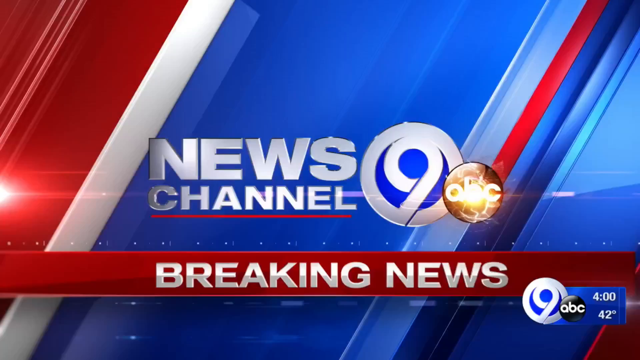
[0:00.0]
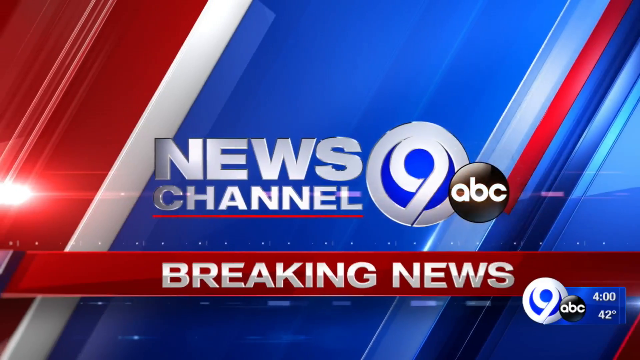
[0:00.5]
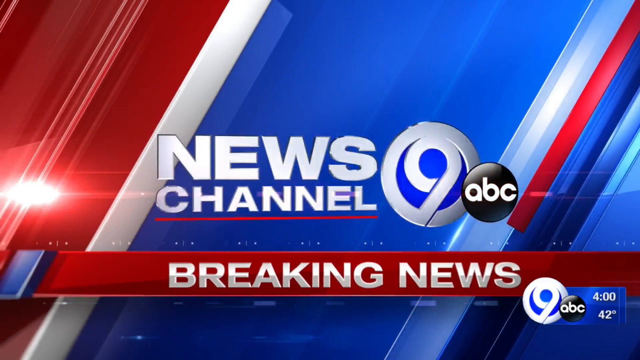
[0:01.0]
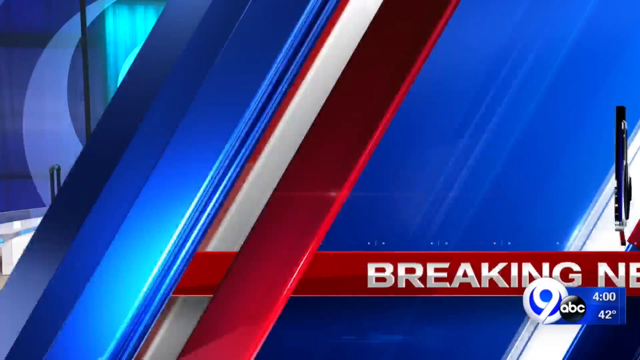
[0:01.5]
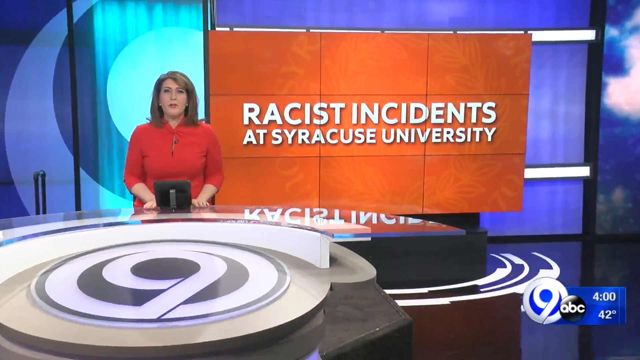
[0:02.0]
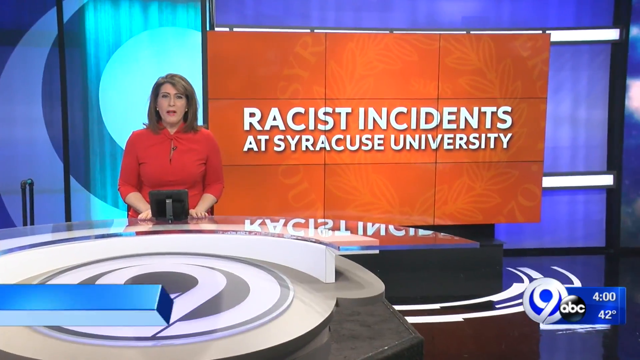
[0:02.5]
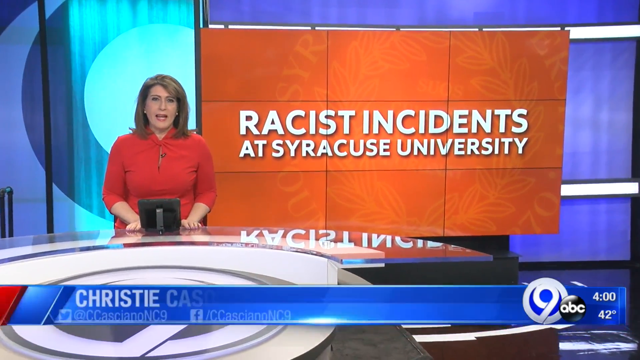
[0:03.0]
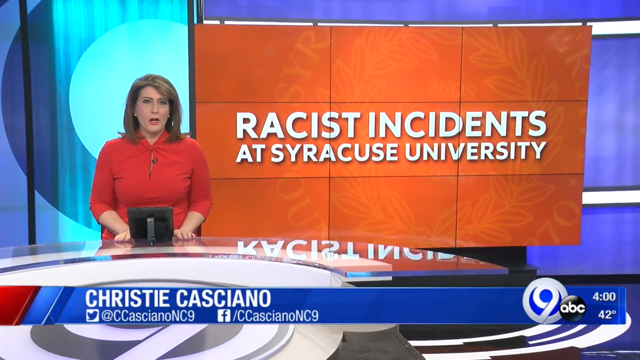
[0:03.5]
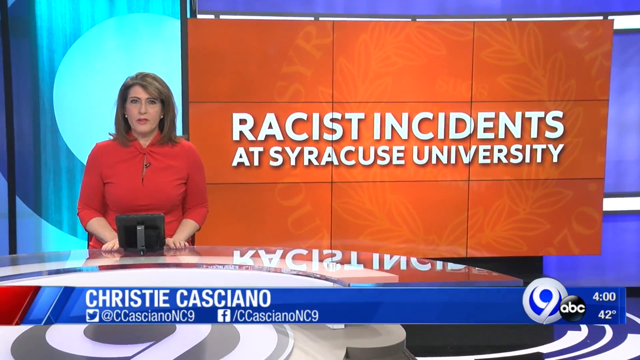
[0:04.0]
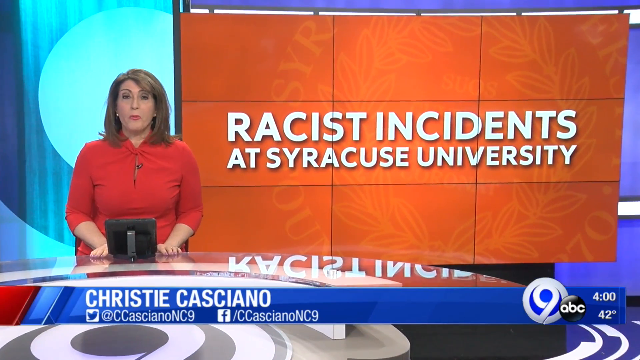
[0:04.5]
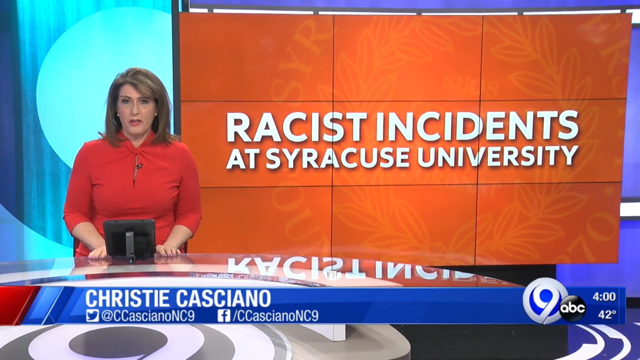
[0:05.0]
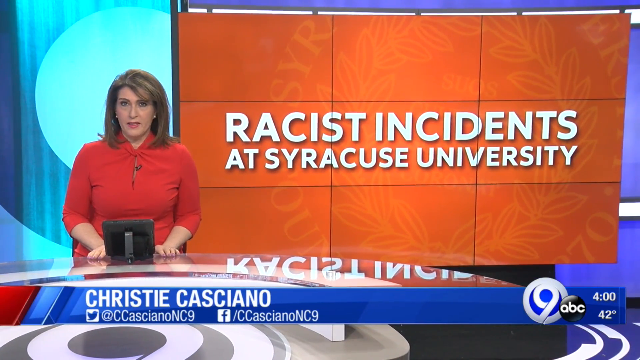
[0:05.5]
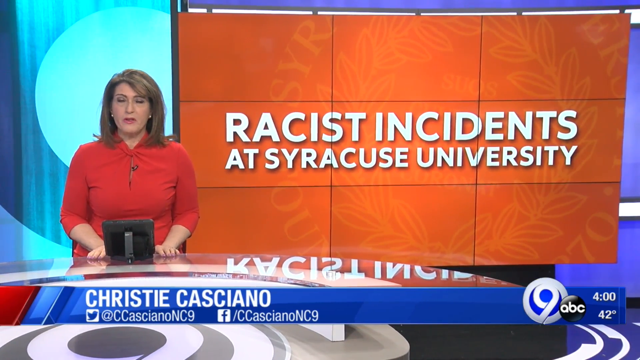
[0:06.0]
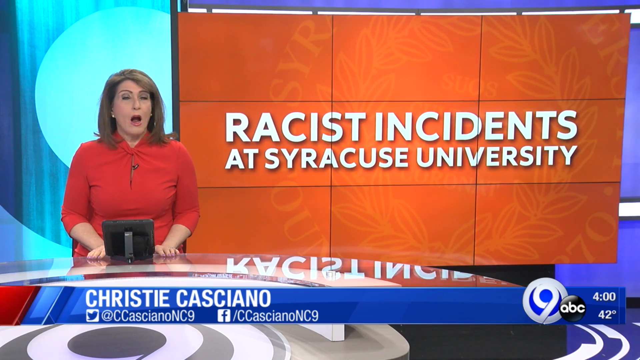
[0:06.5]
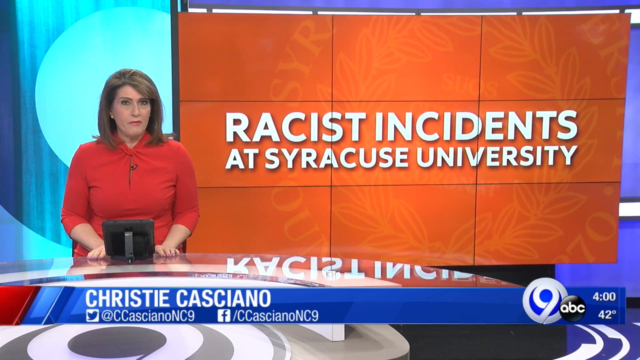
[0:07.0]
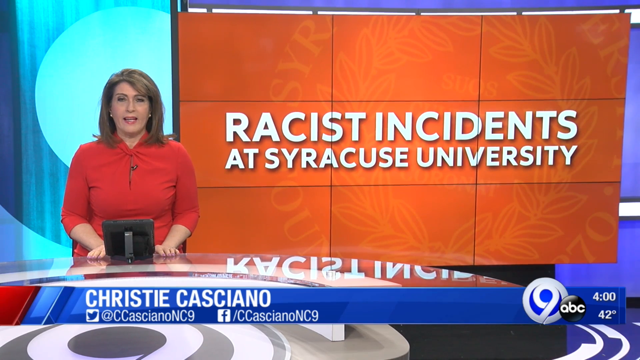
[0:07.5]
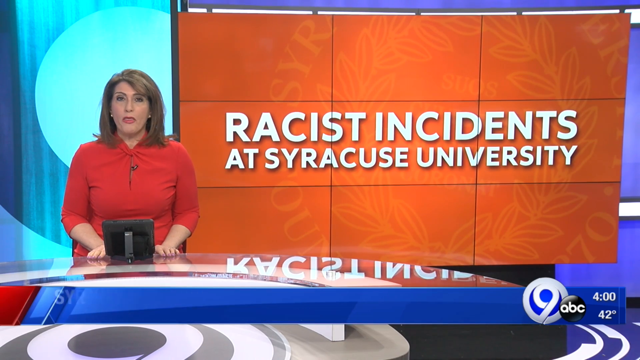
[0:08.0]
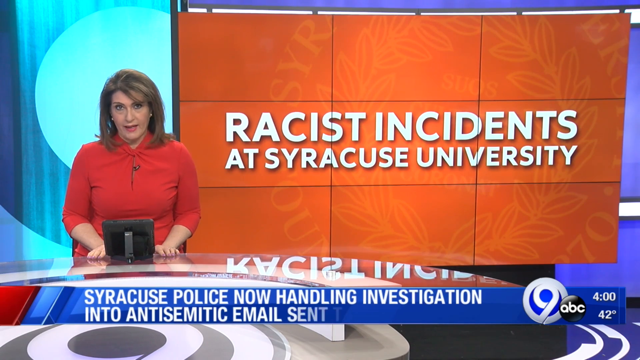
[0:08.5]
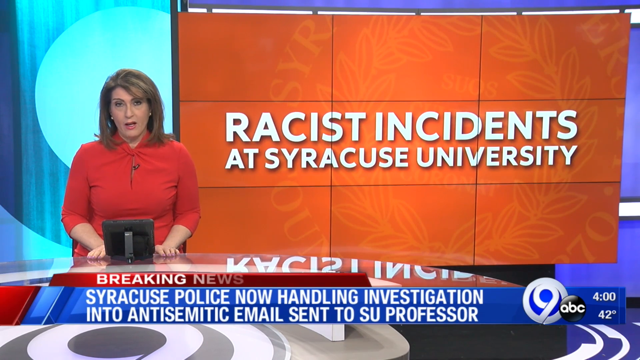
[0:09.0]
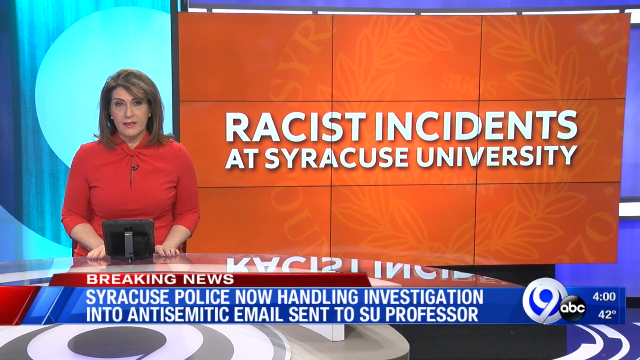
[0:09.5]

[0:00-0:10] The video is a breaking news report from News Channel 9, an ABC affiliate. It begins with a title screen showing the station's logo, with a "Breaking News" banner across the bottom of the screen. This moves to the side, revealing a female news presenter standing behind a desk in a studio. Behind her is a large video screen display that looks as if it is divided into nine different sections. A blue text bar appears at the bottom of the screen identifying the presenter as Christie Casciano as the camera zooms into her and the video display. The text in the bar then changes to read "Breaking news, Syracuse police now handling investigation into antisemitic email sent to SU professor."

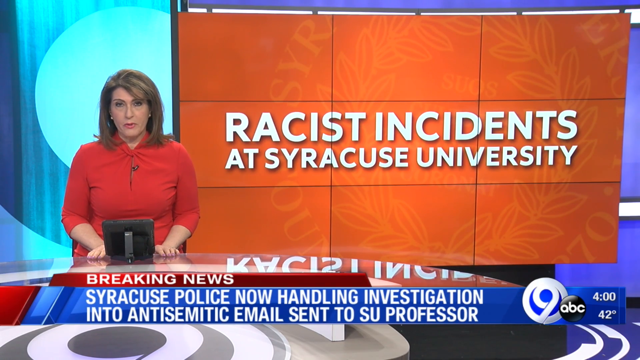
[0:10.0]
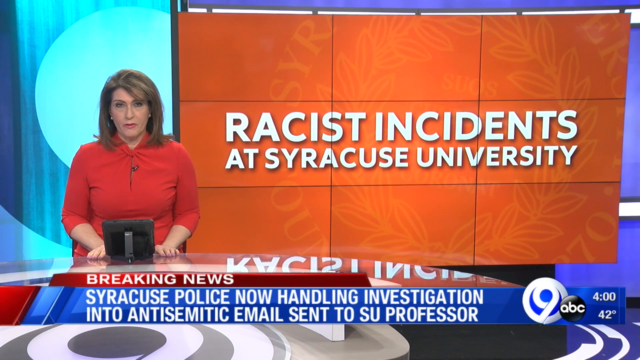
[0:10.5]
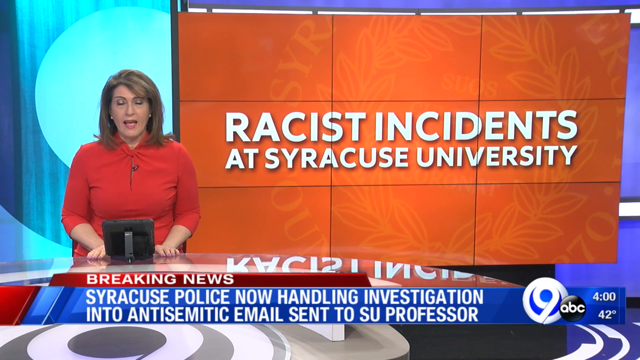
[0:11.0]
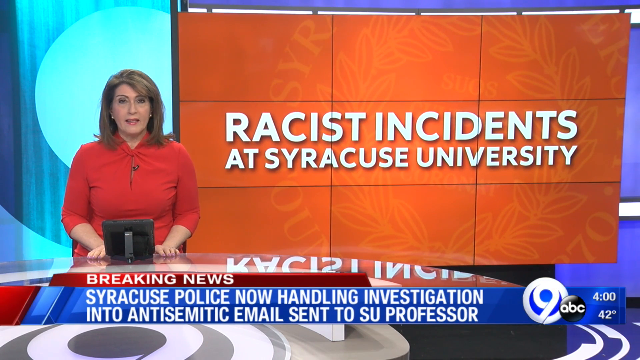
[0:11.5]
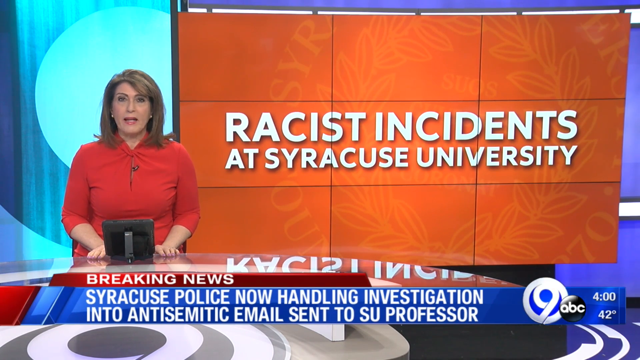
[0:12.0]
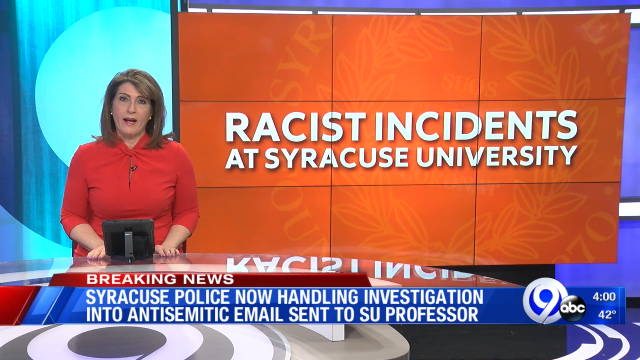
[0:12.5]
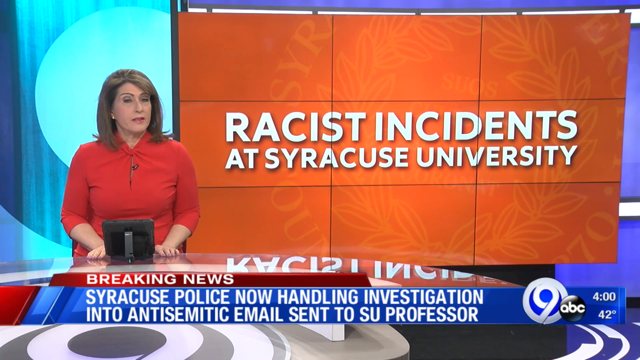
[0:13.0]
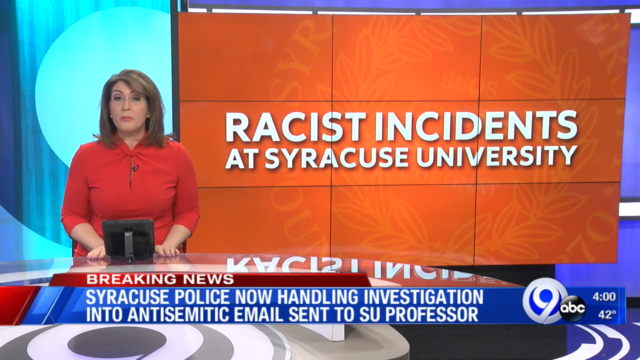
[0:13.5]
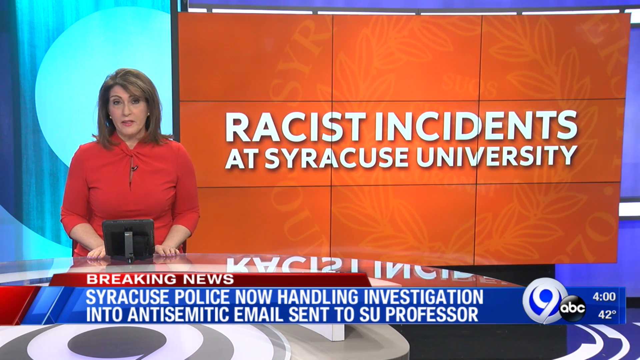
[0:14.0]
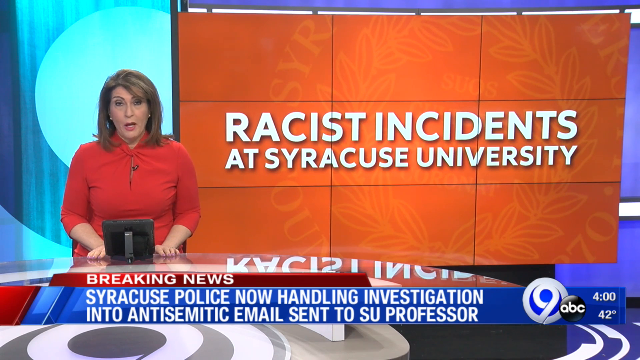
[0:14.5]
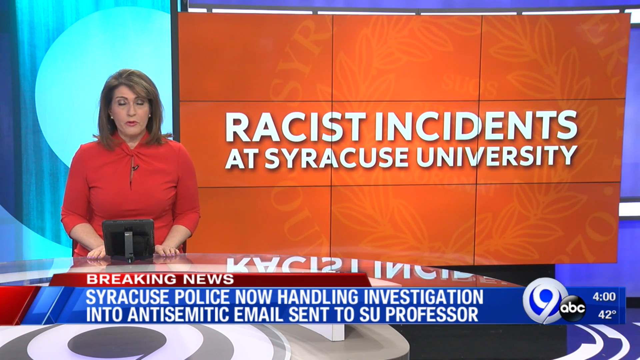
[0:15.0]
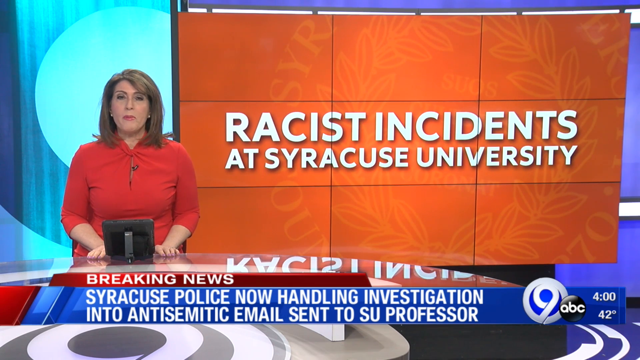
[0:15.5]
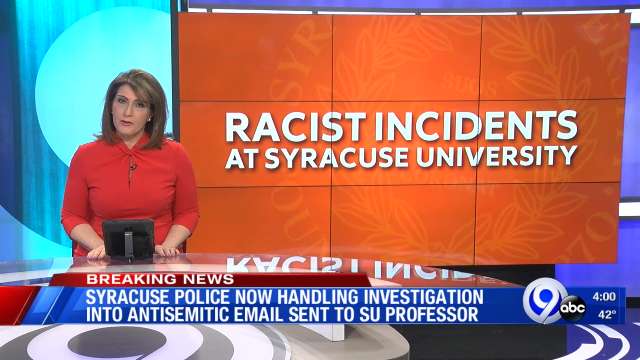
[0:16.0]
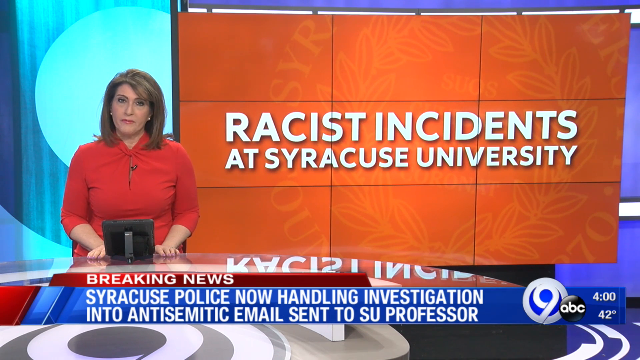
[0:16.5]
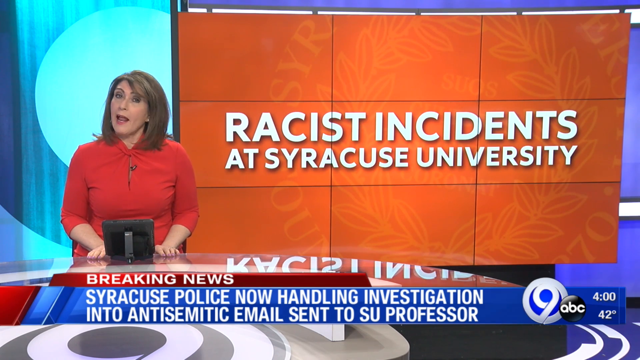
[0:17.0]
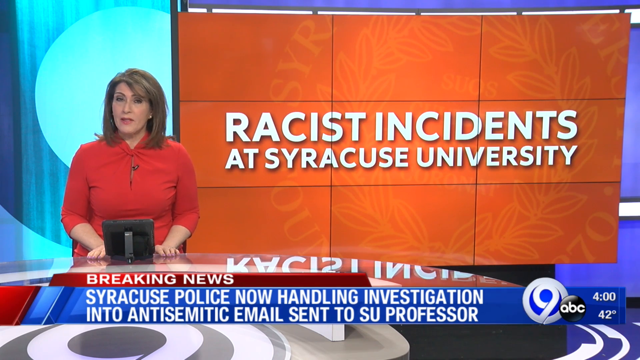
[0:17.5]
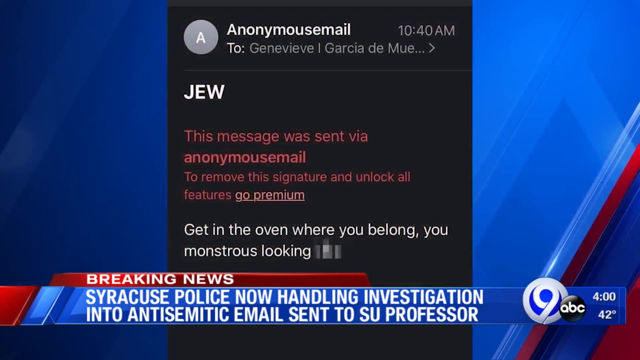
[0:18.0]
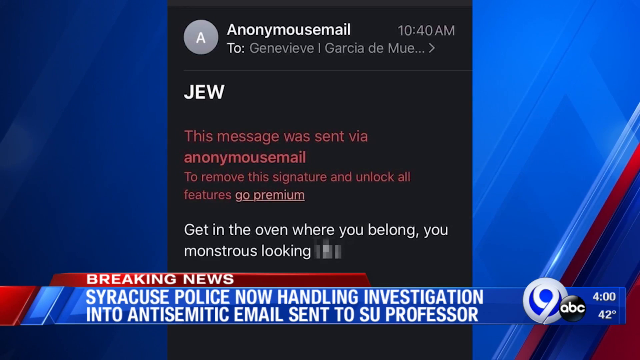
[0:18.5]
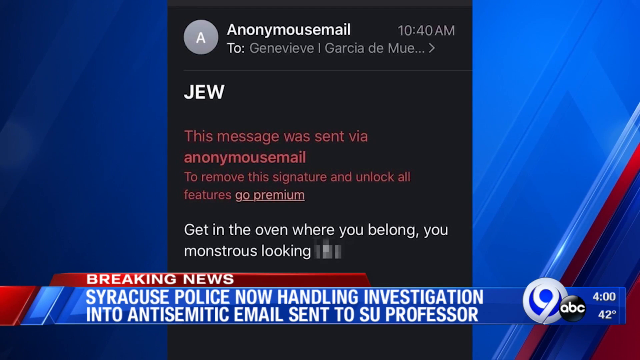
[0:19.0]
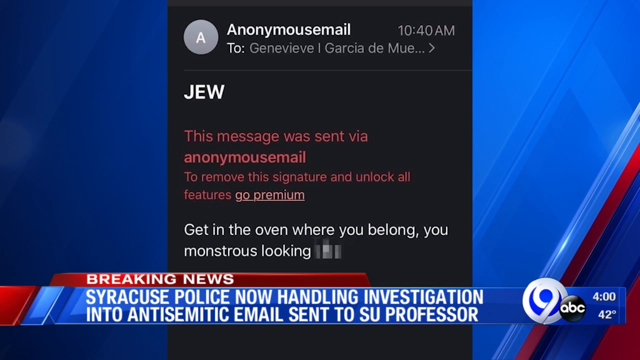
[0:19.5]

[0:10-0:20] In a Channel 9 news report from an ABC affiliate, a female presenter stands behind a desk on a news studio set, in front of a video display board that reads "Racist incidents at Syracuse University." A text bar across the bottom of the screen reads "Breaking news, Syracuse police now handling investigation into anti-Semitic email sent to SU professor." The presenter speaks to the screen for a few moments, and then the image on the screen changes to a close-up of a text message. It is sent from "Anonymousemail" and, according to the top of the message, sent to "Jew." The message reads "Get in the oven where you belong, you monstrous looking..."